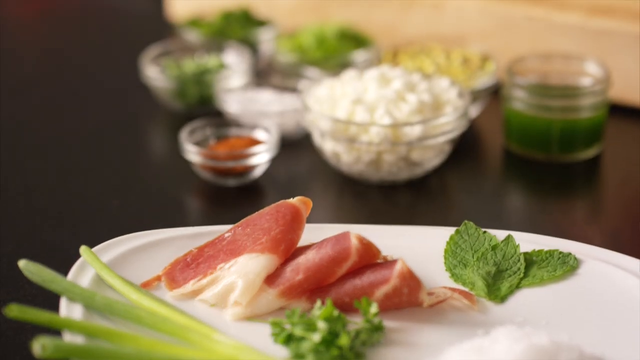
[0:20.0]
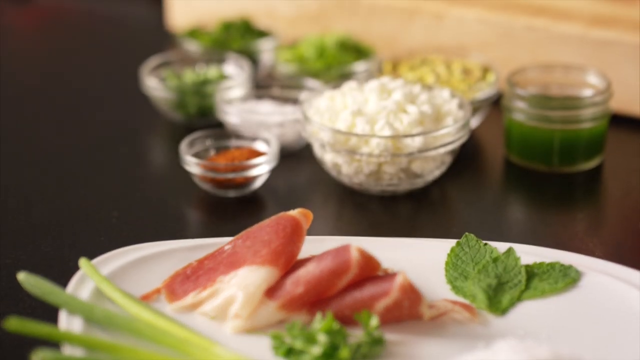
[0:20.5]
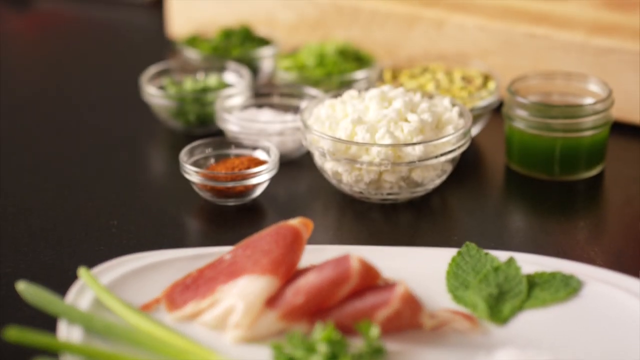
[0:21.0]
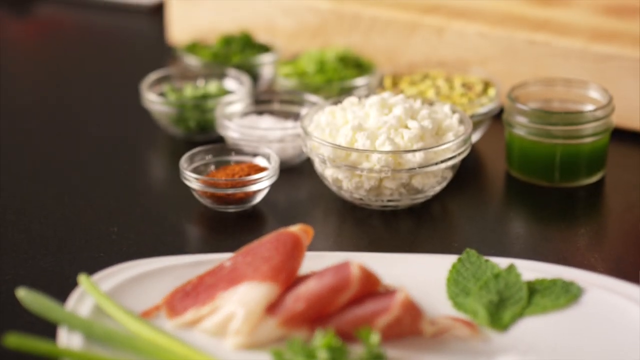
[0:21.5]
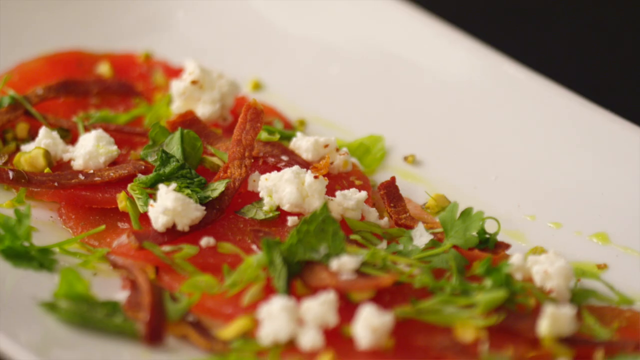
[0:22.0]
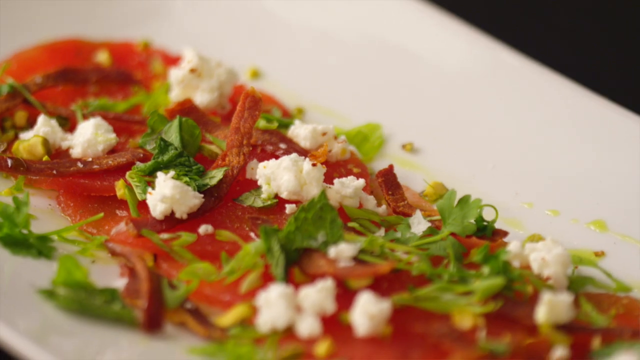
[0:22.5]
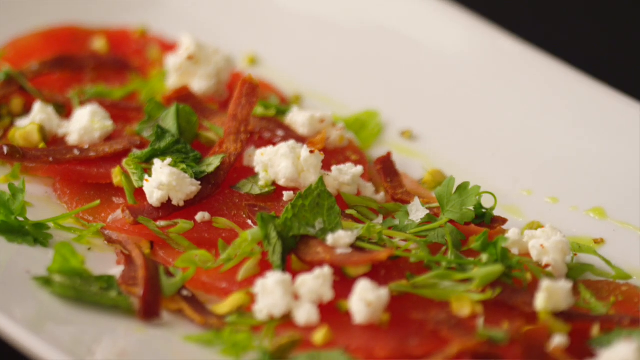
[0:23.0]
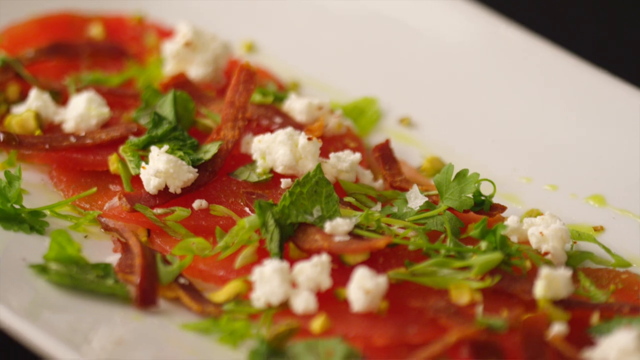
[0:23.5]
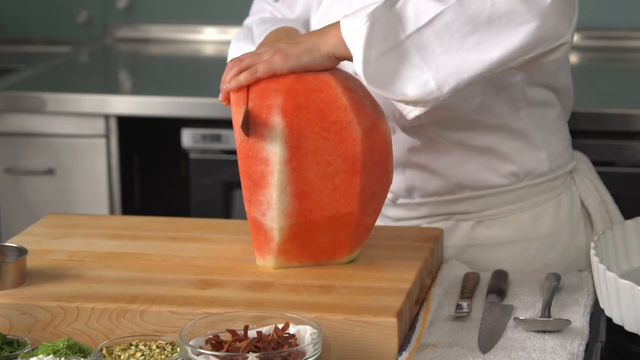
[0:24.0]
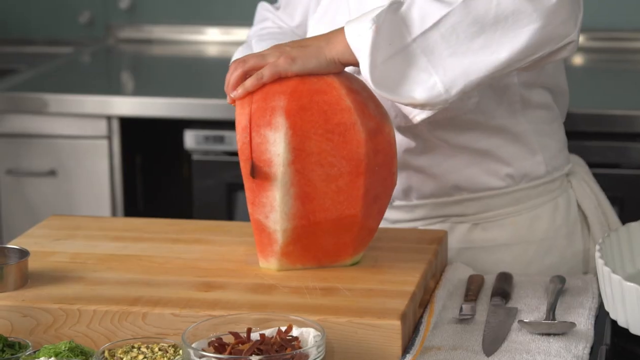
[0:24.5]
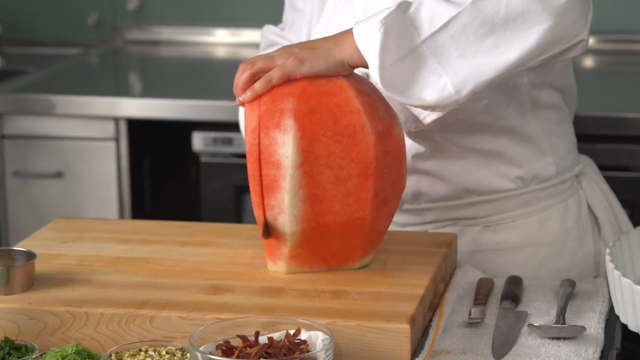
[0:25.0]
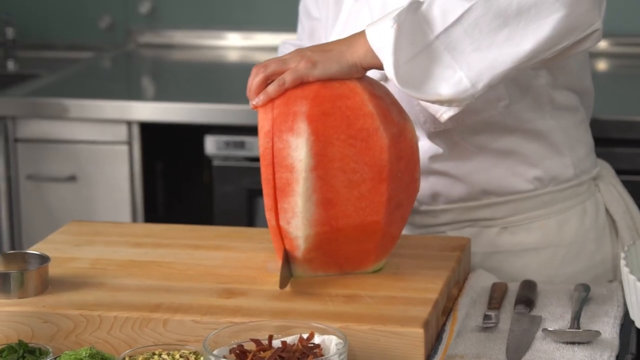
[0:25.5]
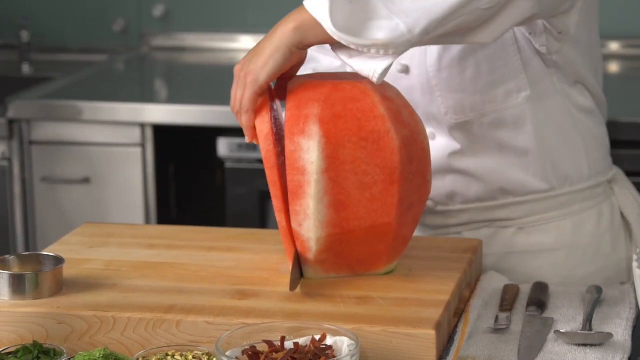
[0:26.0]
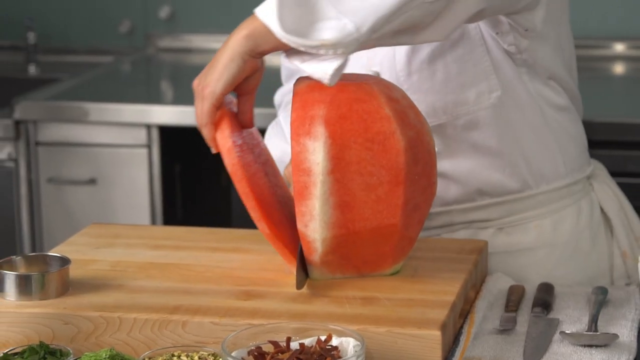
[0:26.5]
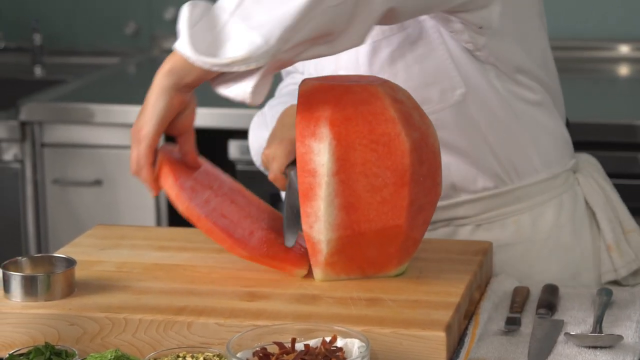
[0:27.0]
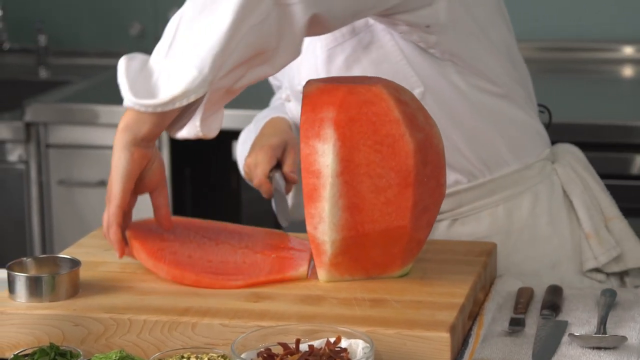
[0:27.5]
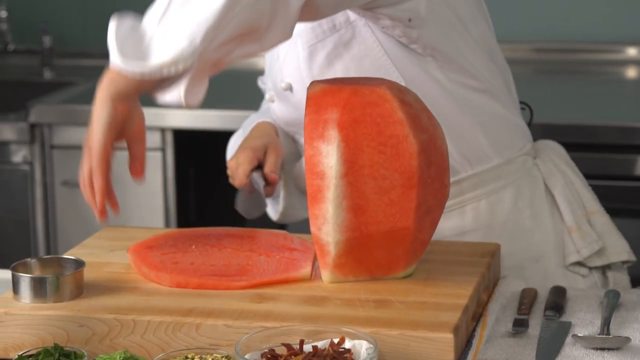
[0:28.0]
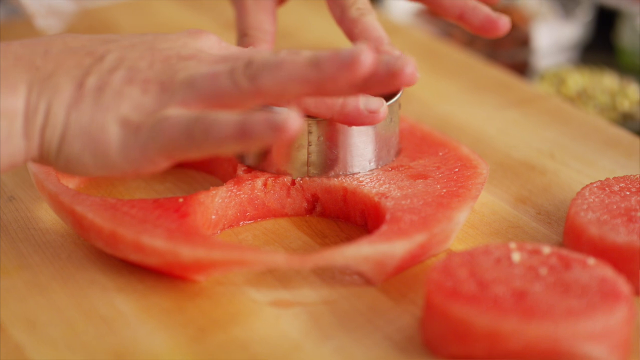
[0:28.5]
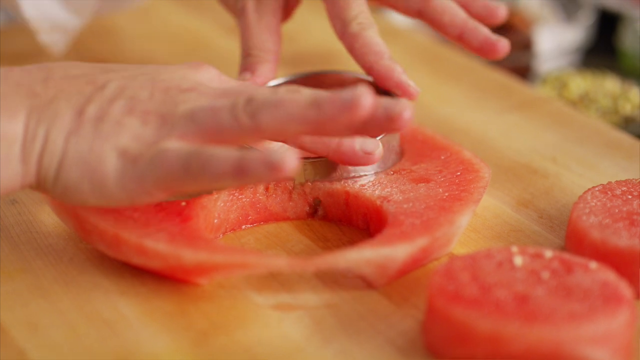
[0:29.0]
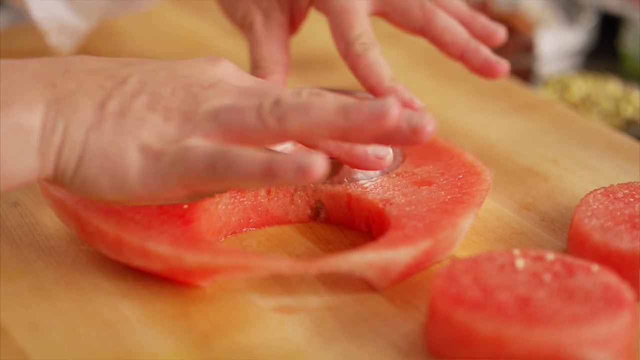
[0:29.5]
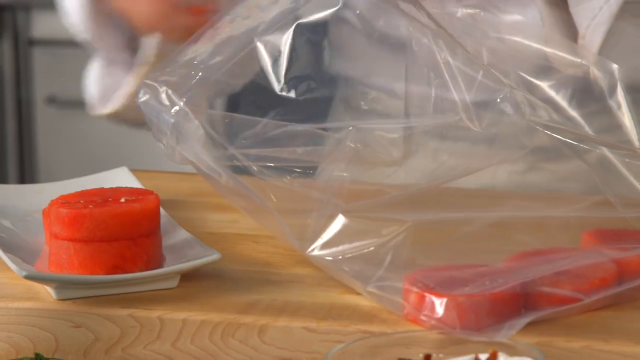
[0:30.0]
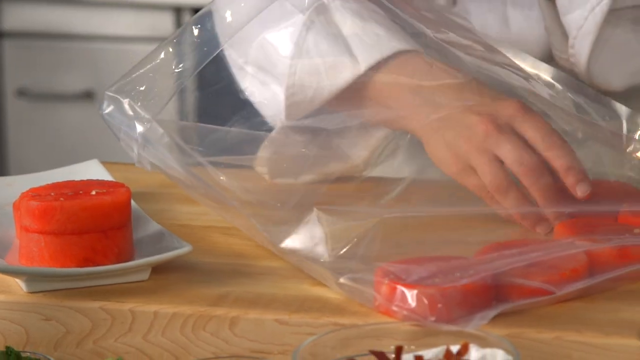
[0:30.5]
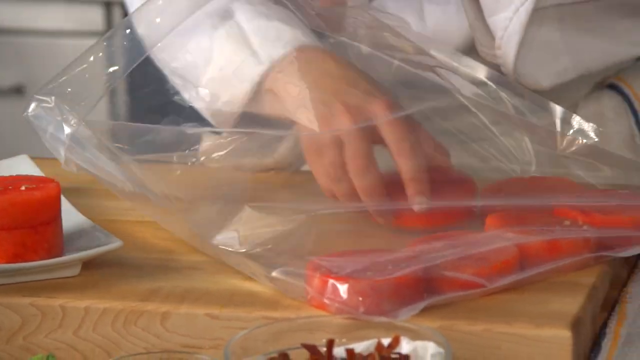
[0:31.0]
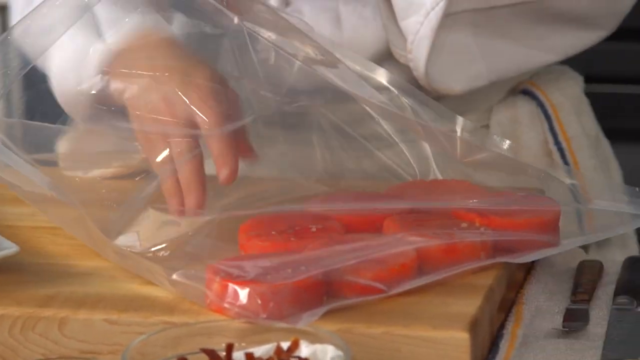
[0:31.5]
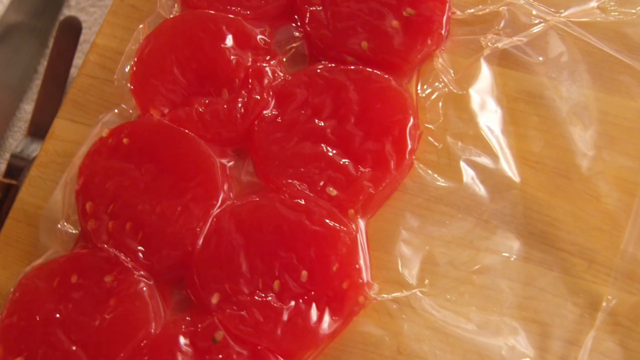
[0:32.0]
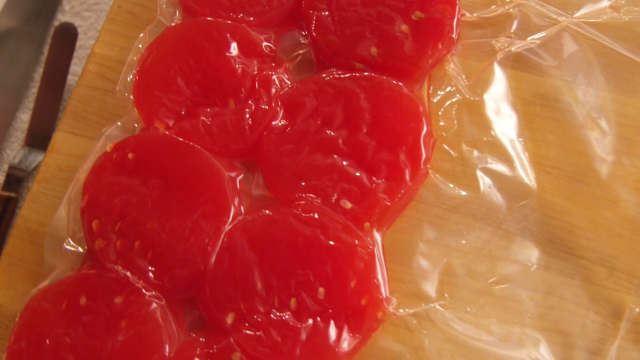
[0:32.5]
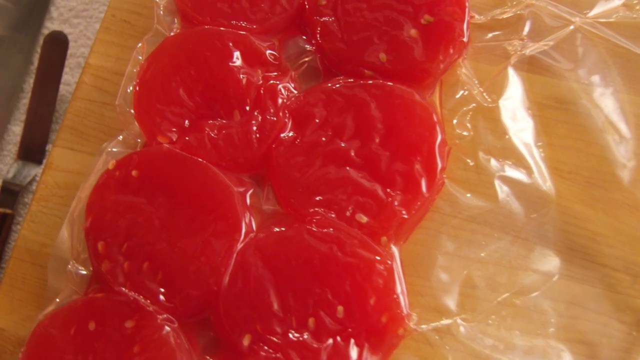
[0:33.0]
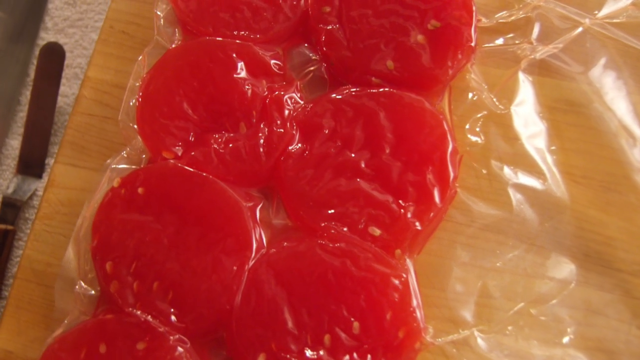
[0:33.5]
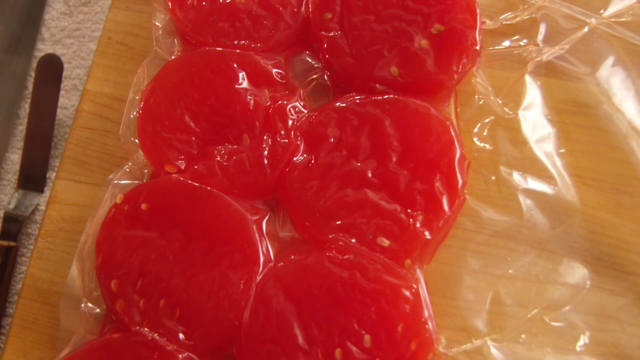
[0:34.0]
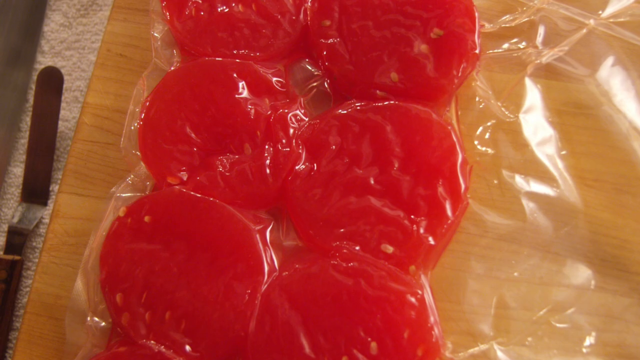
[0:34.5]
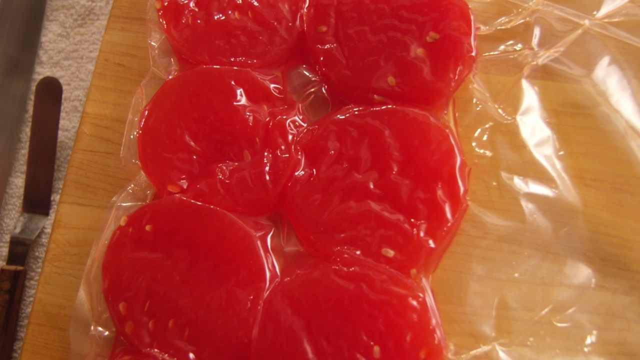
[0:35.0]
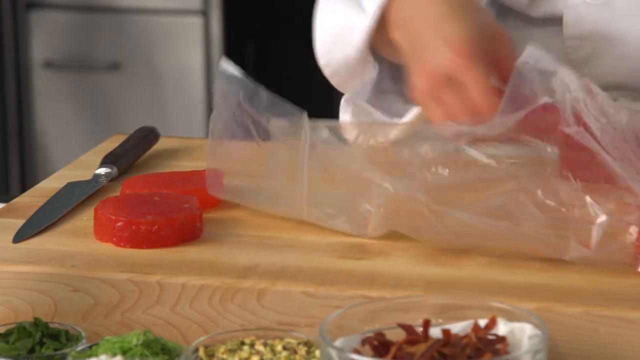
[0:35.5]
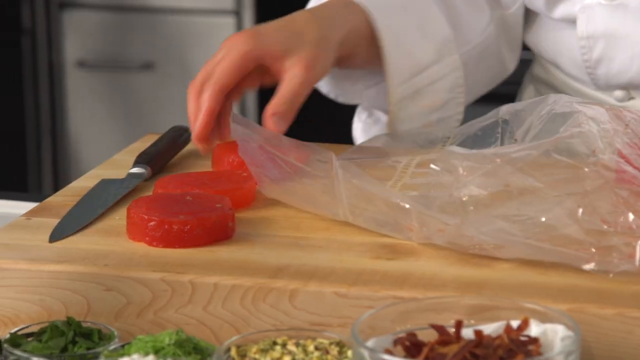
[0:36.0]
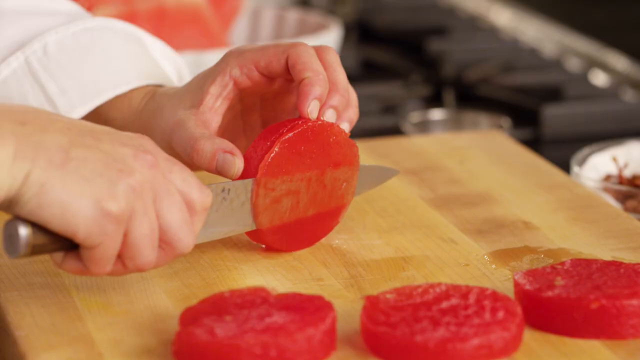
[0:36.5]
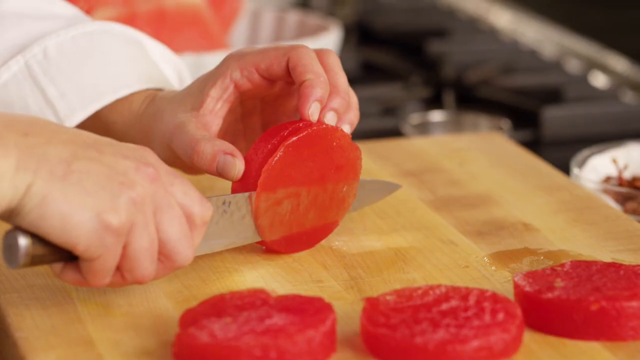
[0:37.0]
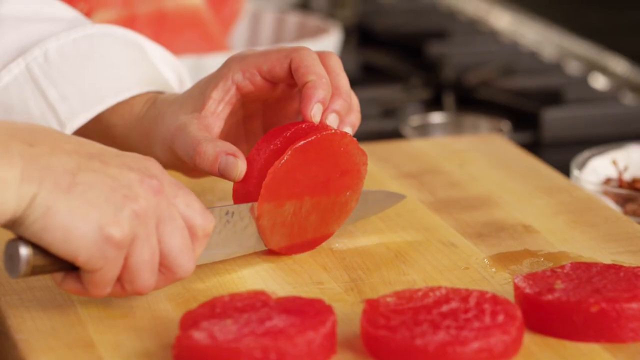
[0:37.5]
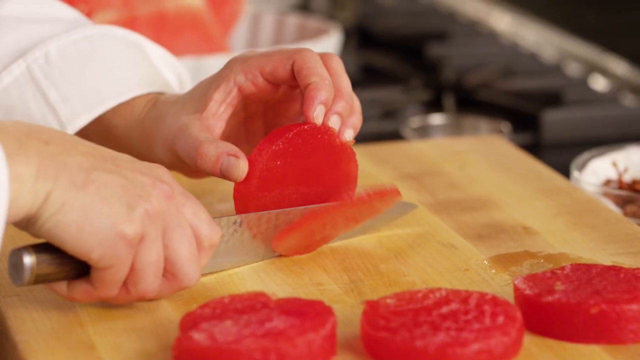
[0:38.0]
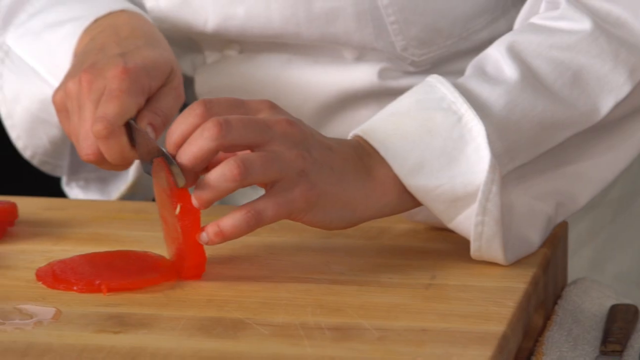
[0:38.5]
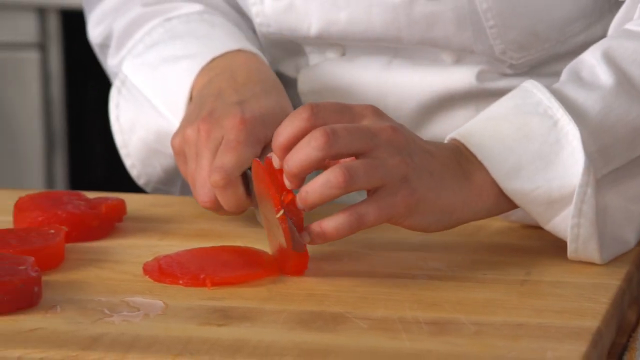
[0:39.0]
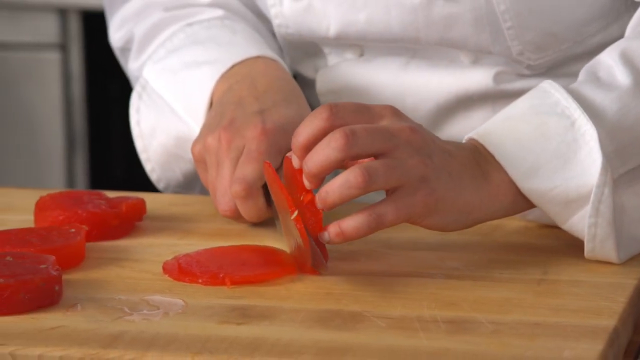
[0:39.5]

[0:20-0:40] A plate is shown, and something like bacon is on someone's hand, along with some small green vegetable pieces. There are small containers of something, possibly cottage cheese, on a brown table. Sliced watermelon appears with a little cottage cheese and a little basil on top. A chef then cuts a big watermelon that is white-skinned, without the green shell, into big slices. Using a small tool, they make little circles out of the watermelon, put them in a bag and sort of compress them. They take the watermelon out and slice it into smaller slices.